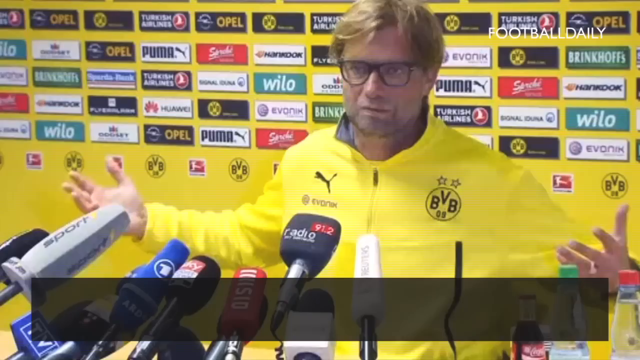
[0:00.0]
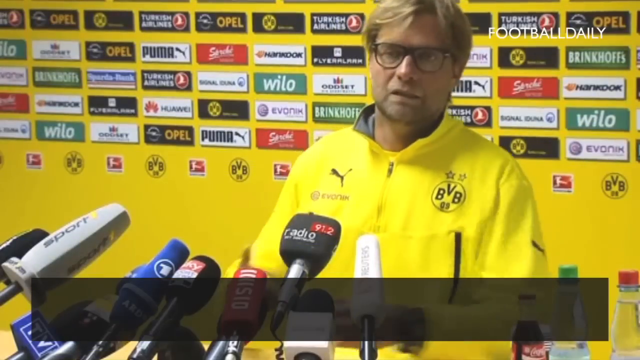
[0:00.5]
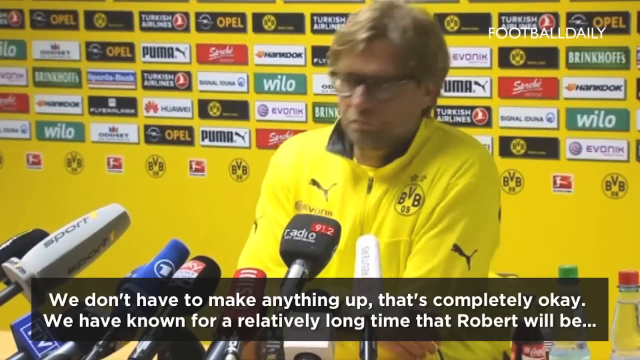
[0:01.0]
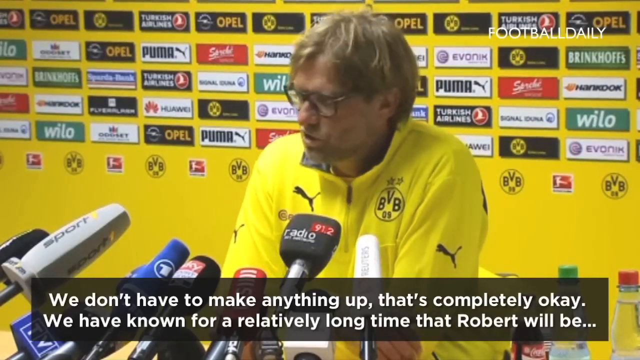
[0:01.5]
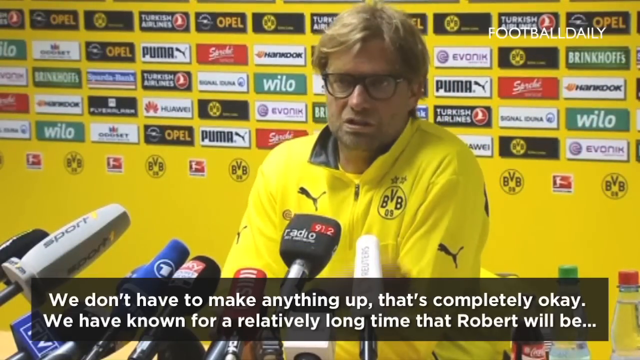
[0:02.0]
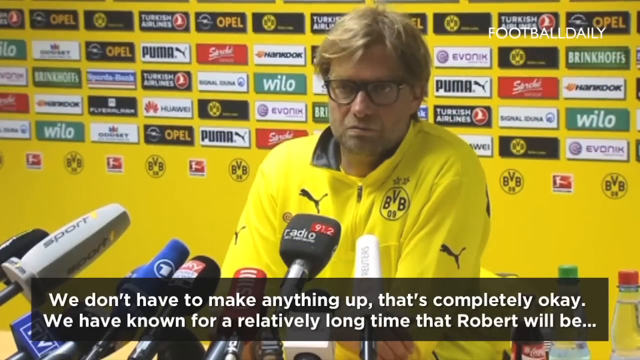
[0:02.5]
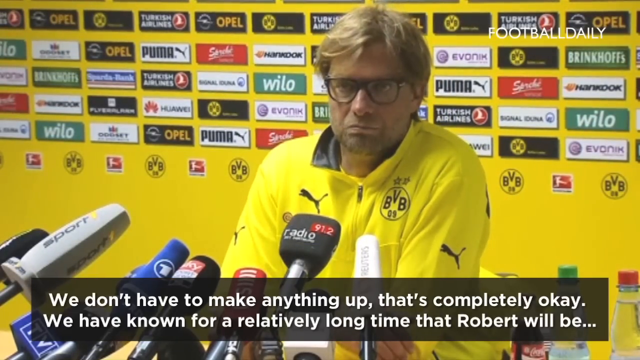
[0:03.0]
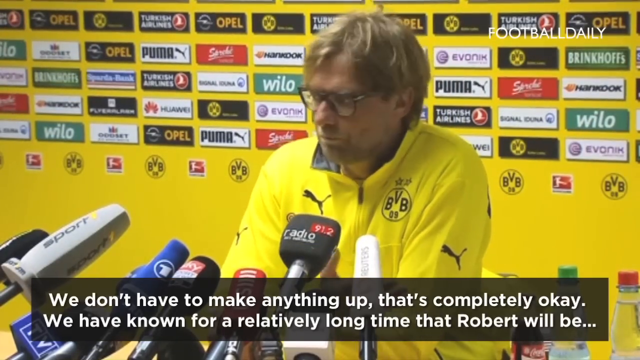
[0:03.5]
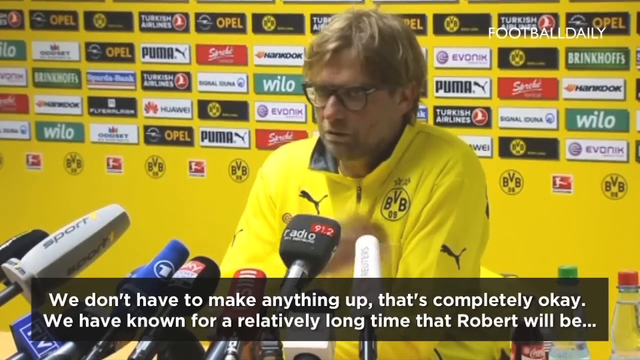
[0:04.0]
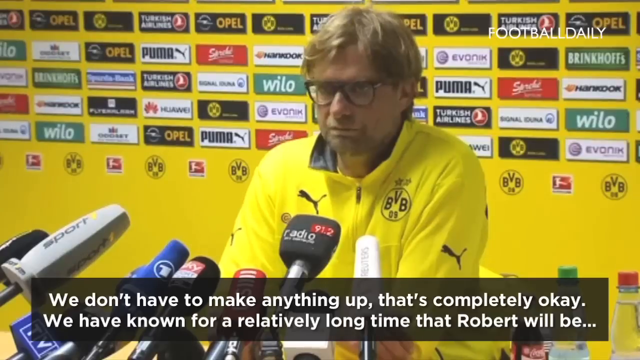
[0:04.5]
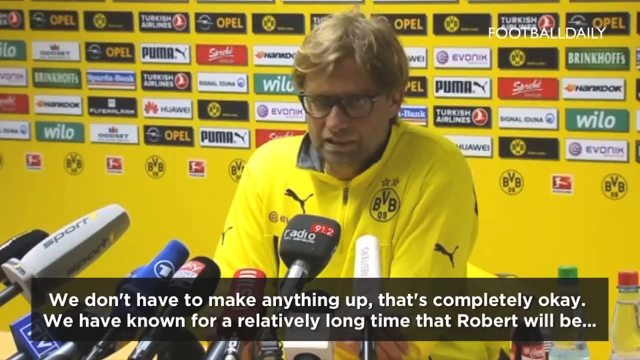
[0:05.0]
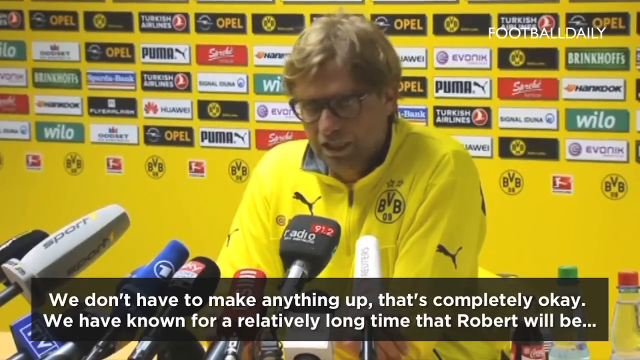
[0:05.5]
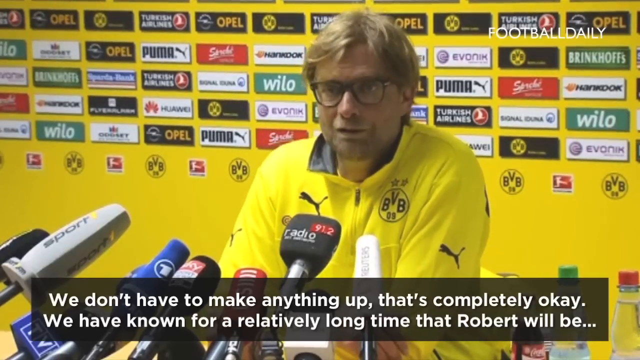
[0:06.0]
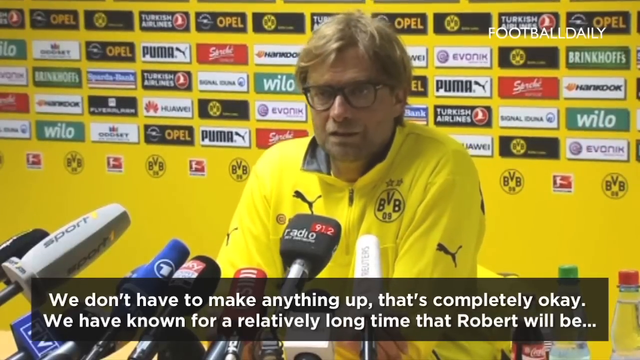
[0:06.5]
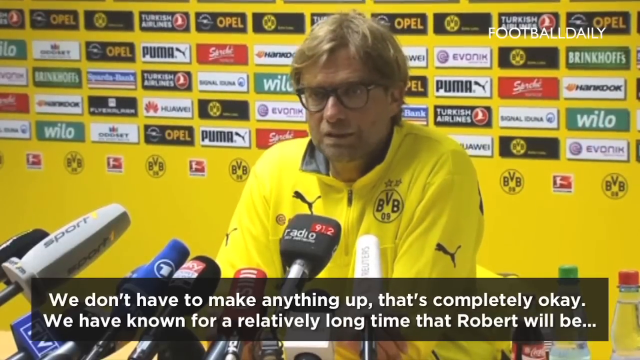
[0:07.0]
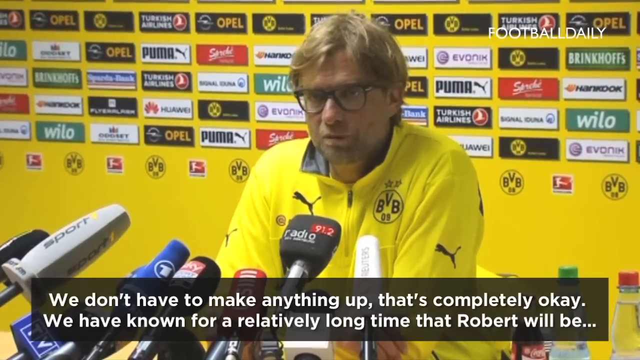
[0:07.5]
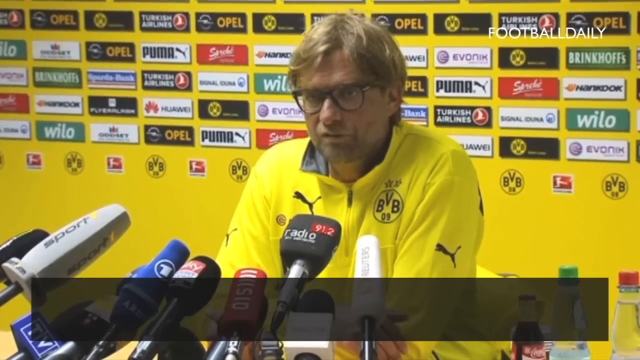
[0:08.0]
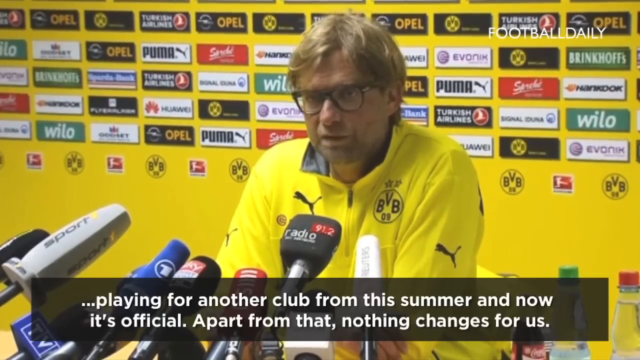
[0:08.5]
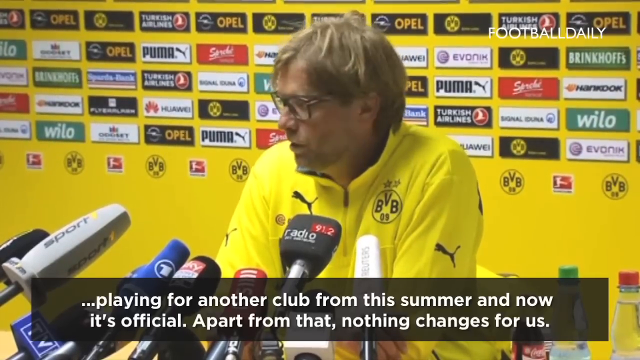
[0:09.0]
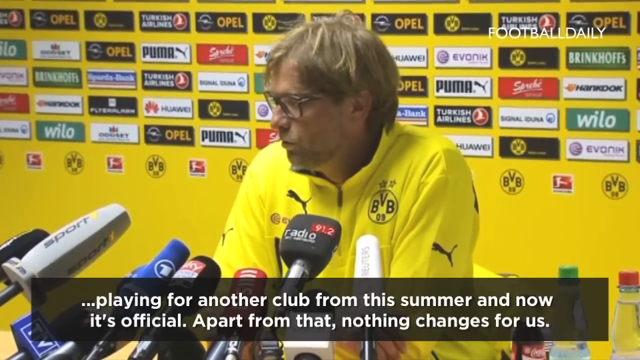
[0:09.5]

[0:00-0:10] A man who looks to be middle-aged, in his mid to late 30s, stands in front of a podium. He has sandy blonde hair, wears black square glasses and looks directly toward the camera. Behind him is a yellow wall lined with advertising rectangles along its top portion, and the most striking visual element is the overwhelming use of yellow and branding. The BVB football club logo is on the breast of his jacket, opposite a Puma logo. He speaks in a relatively energetic fashion, looking toward the crowd and moving his head back and forth. He has an irritated or serious look on his face, looks dejected, and shakes his head back and forth as he continues speaking into the microphones. The microphones are lined from left to right, and the middle one carries a "radio 91.2" logo. A text transcription runs at the bottom of the video.